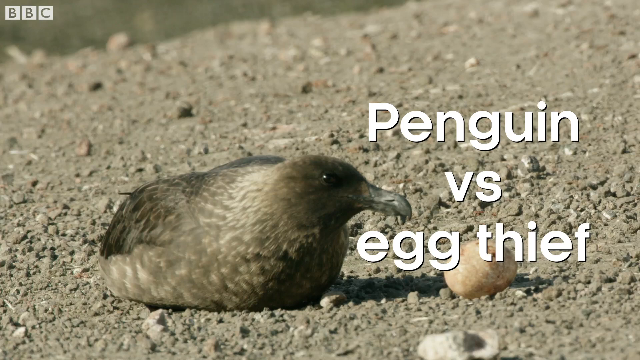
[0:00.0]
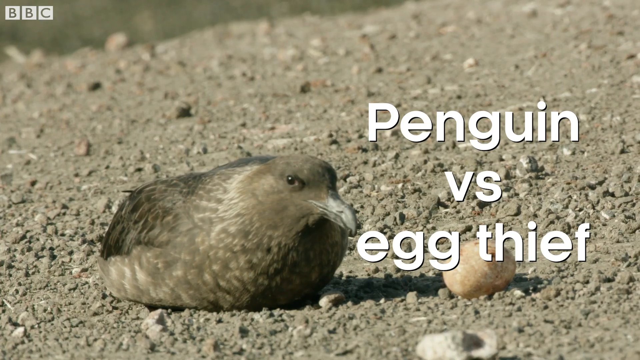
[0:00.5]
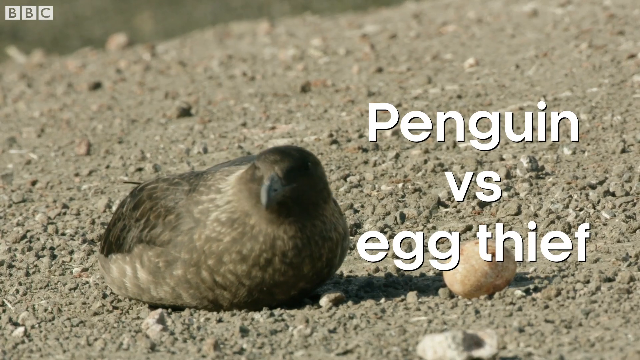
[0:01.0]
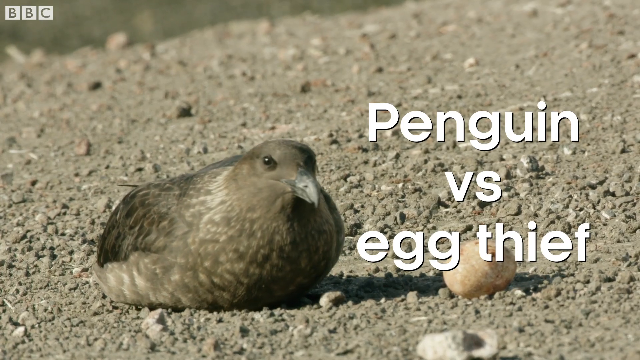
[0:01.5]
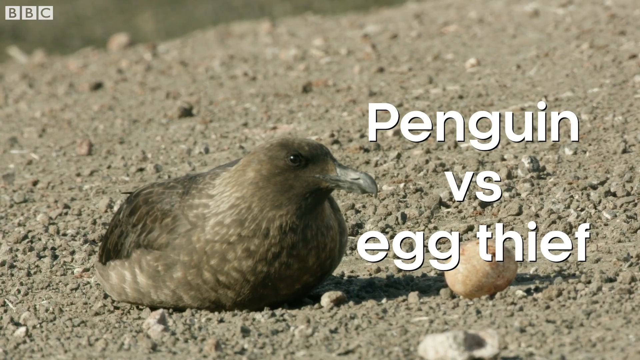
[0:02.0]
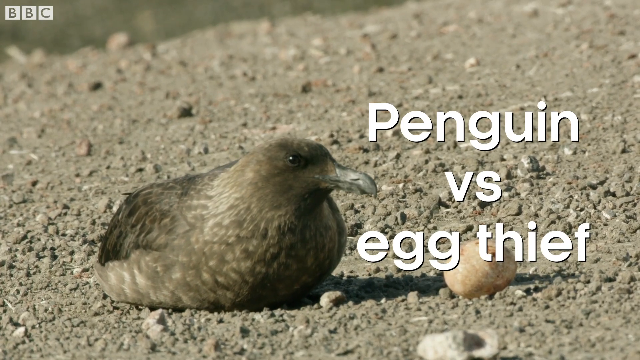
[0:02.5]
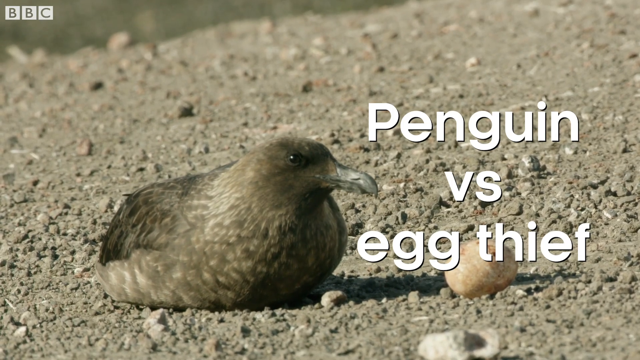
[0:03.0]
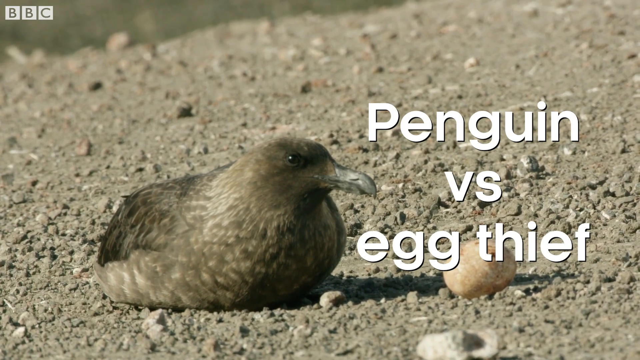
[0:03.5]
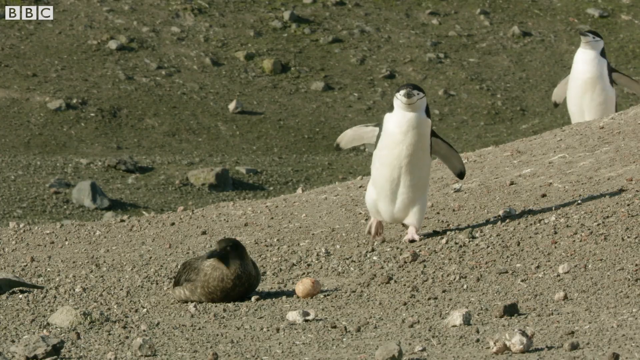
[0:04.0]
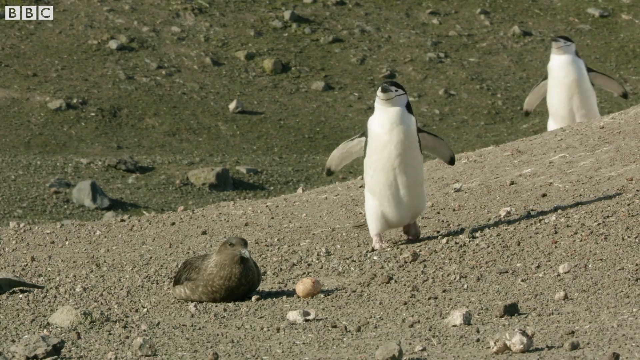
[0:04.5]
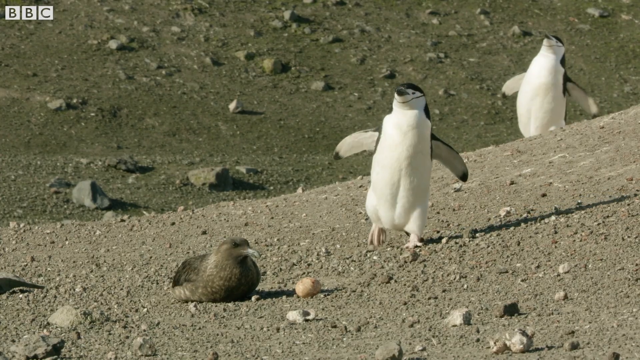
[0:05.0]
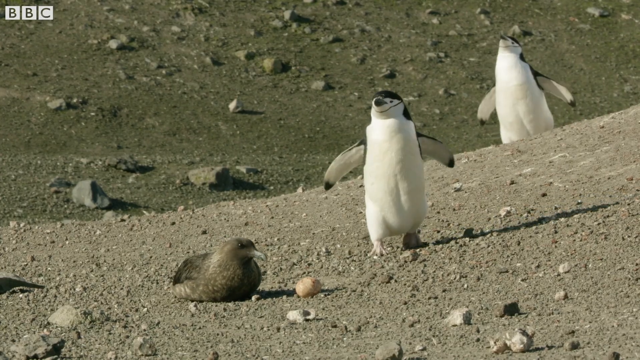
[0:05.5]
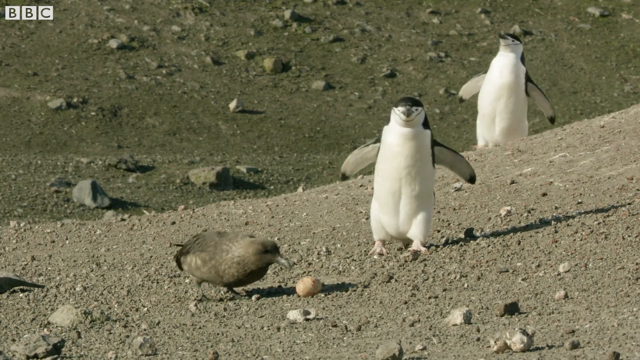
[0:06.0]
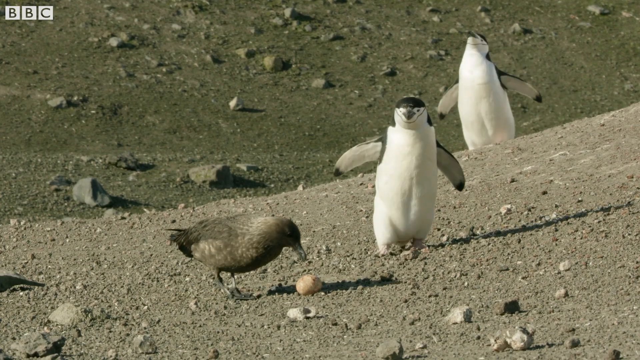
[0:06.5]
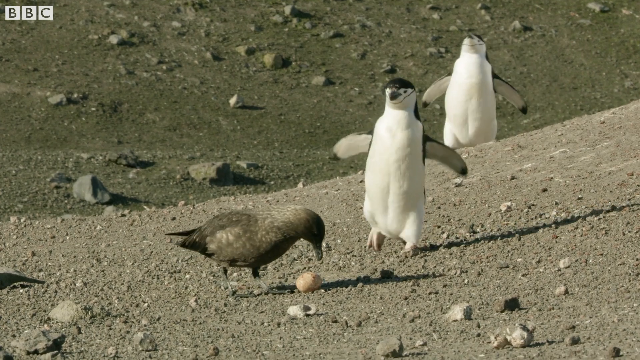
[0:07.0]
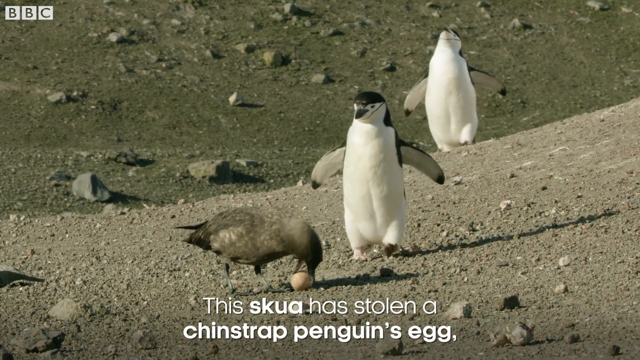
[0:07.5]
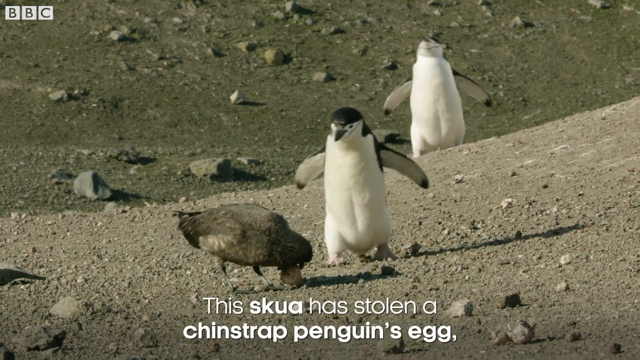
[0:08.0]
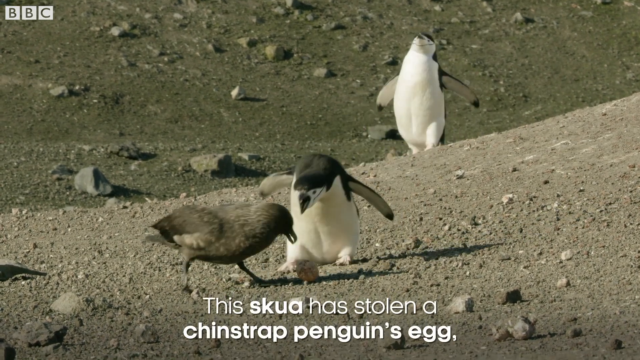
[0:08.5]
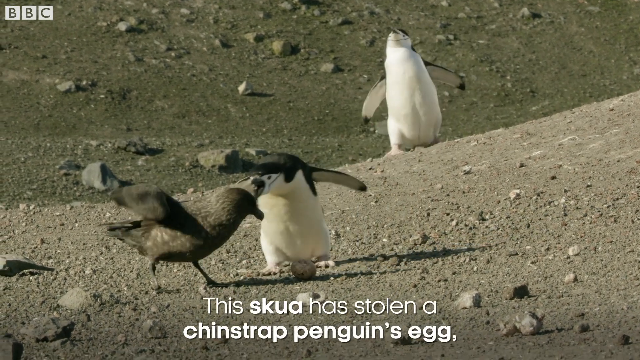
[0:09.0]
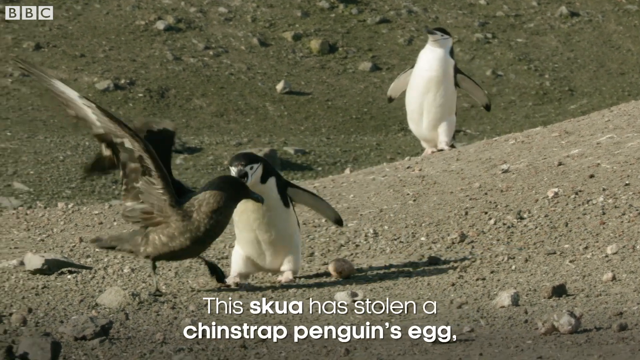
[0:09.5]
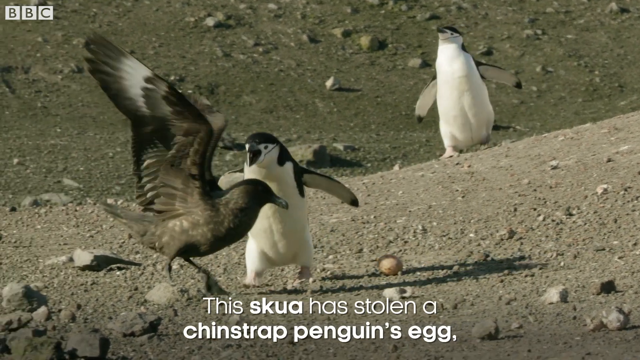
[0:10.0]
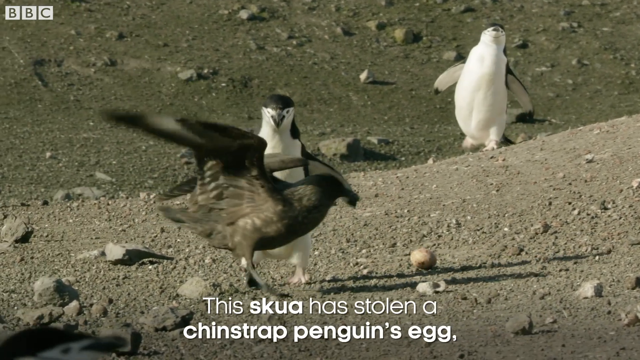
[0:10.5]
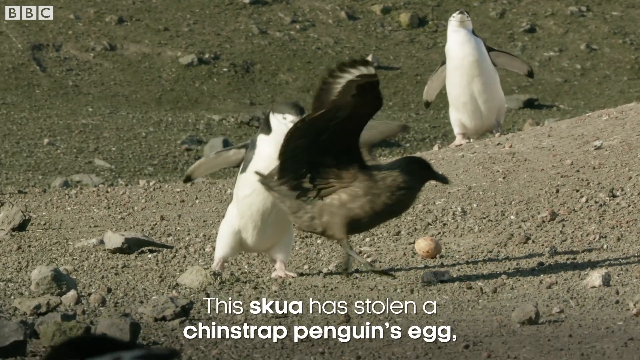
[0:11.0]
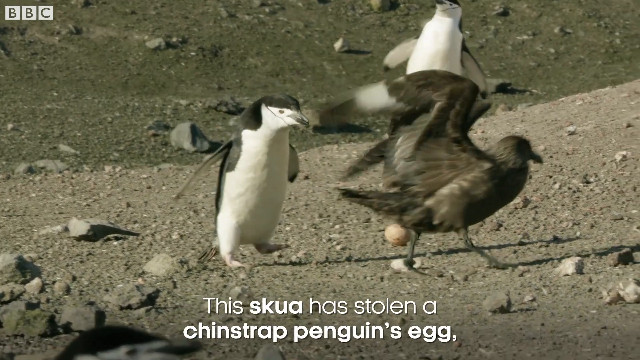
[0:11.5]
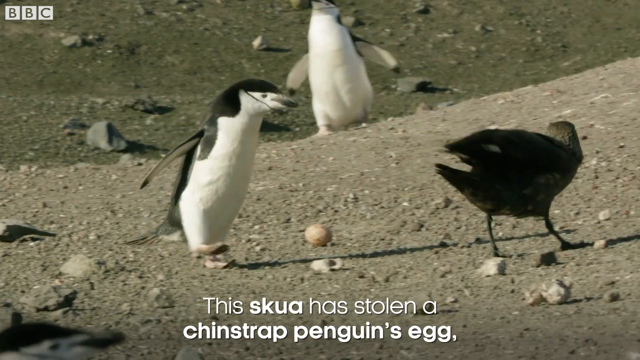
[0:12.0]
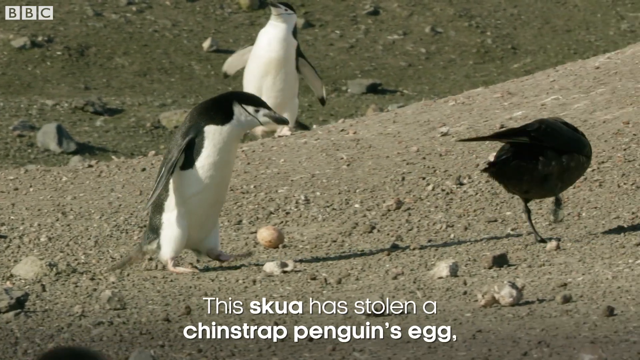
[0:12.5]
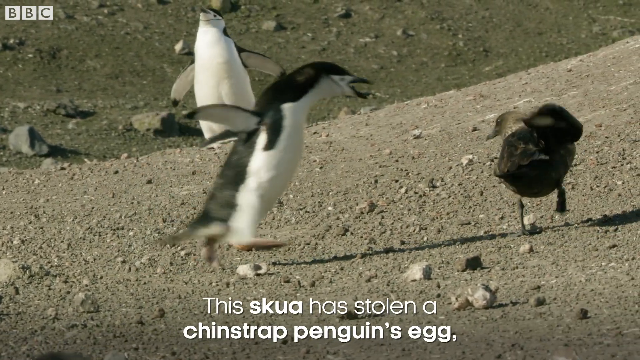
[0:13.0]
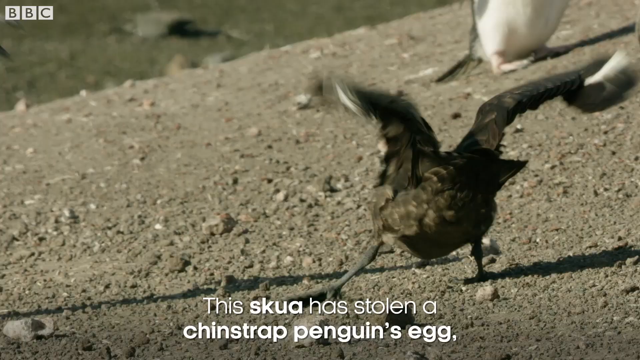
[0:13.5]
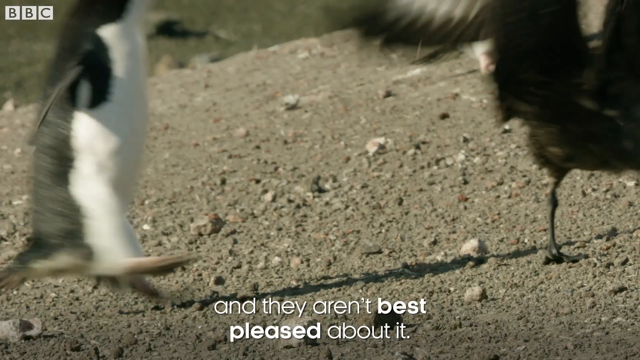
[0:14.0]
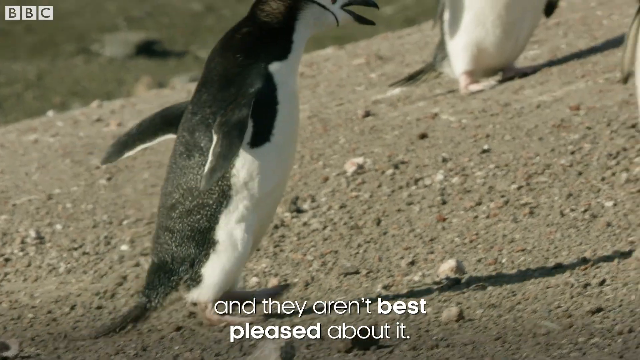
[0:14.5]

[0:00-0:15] The scene is set along a rocky coast, on a somewhat gray sandy beach with lots of rocks. Penguins are trying to scare off a bird that is trying to steal their egg. The water bird is close to the egg, picking at it and trying to steal it. The penguins chase after it; there are three penguins going after the bird. One of the main penguins pokes at the bird with its mouth open wide, intent on getting the bird away from the egg, while the other penguins follow behind to try to catch the bird.